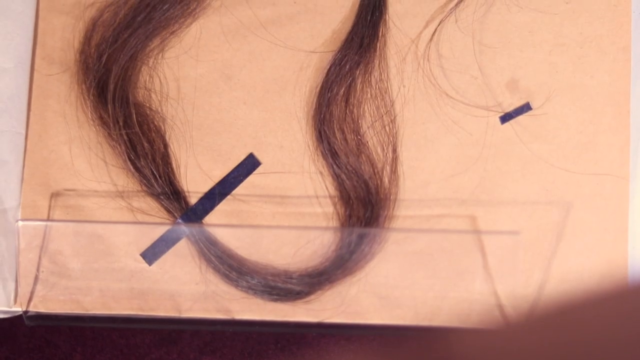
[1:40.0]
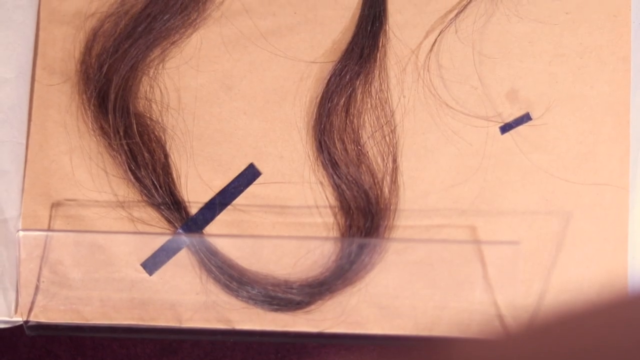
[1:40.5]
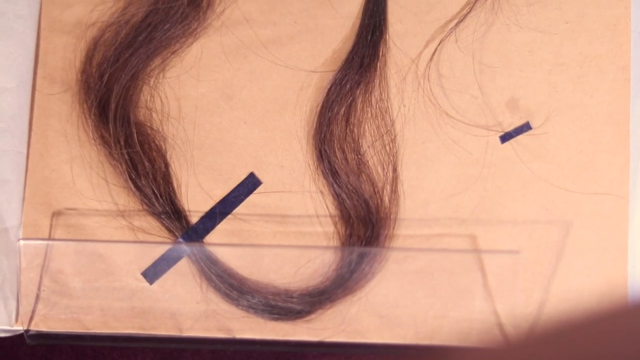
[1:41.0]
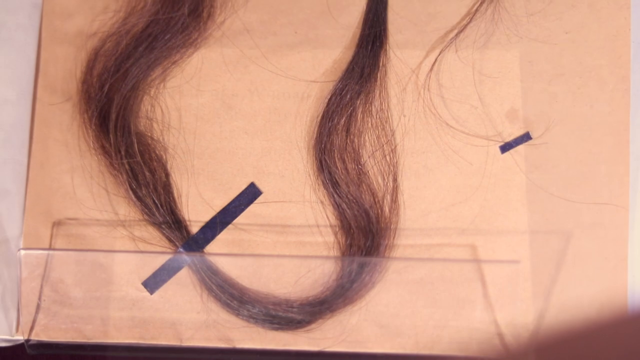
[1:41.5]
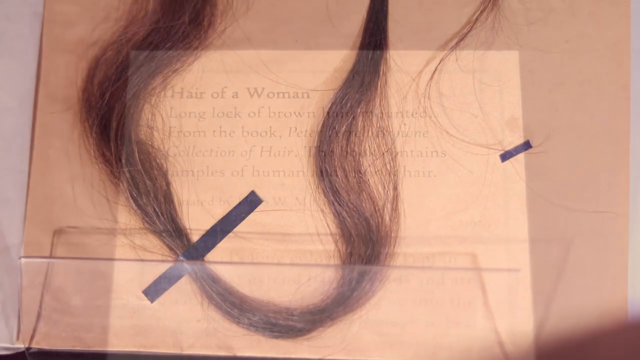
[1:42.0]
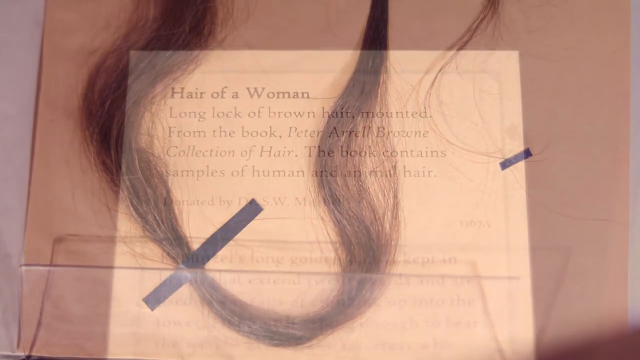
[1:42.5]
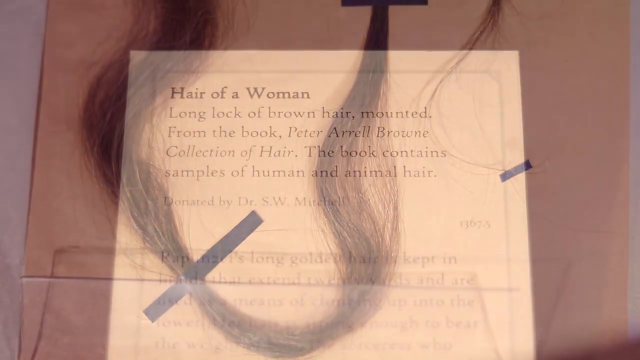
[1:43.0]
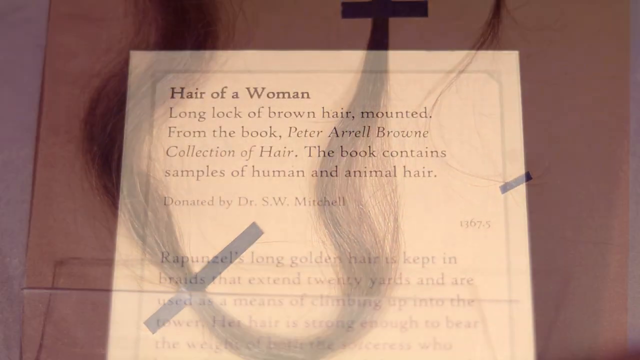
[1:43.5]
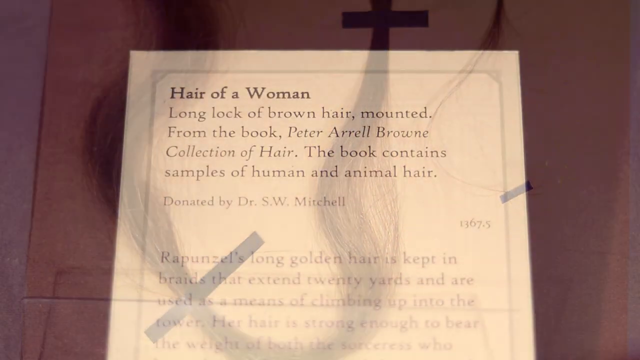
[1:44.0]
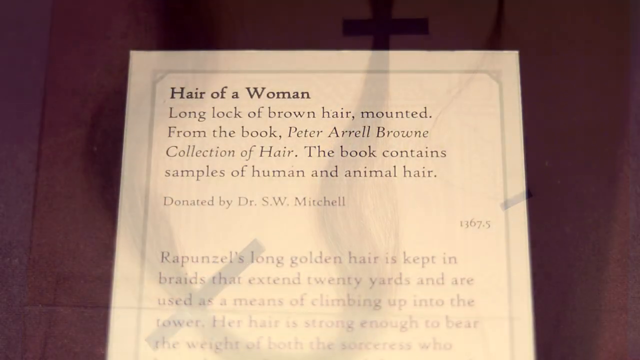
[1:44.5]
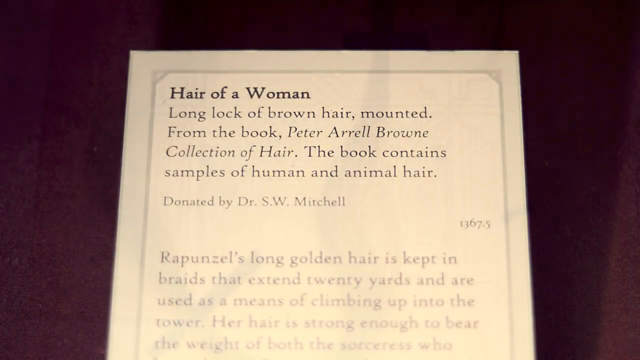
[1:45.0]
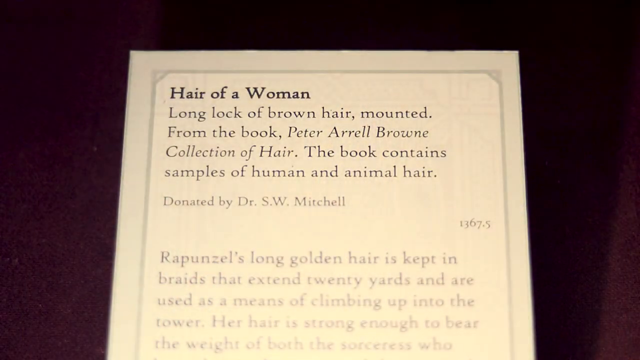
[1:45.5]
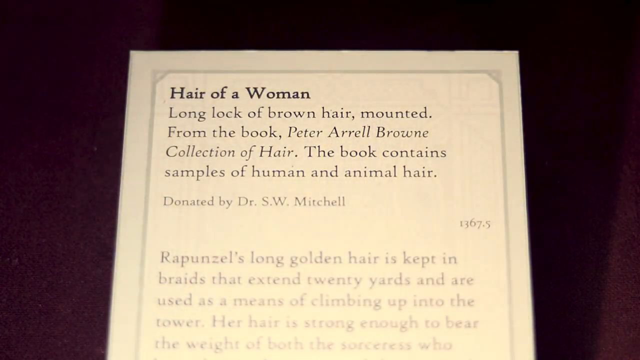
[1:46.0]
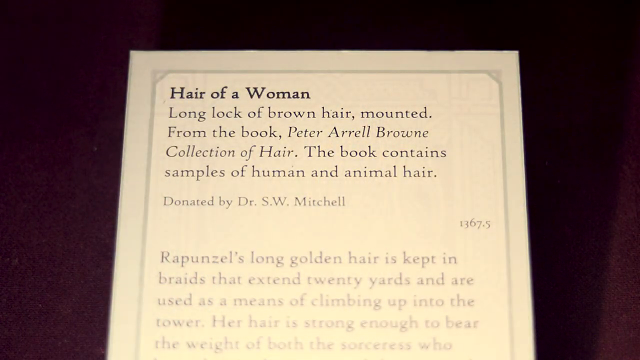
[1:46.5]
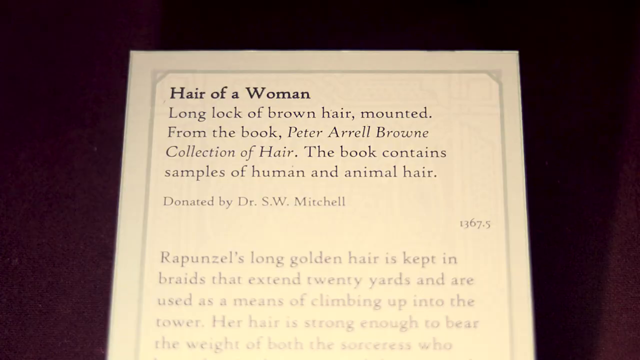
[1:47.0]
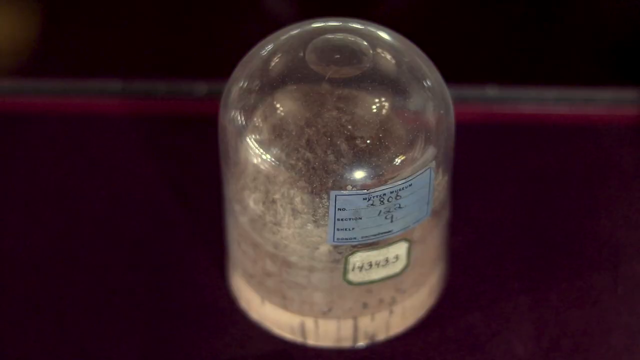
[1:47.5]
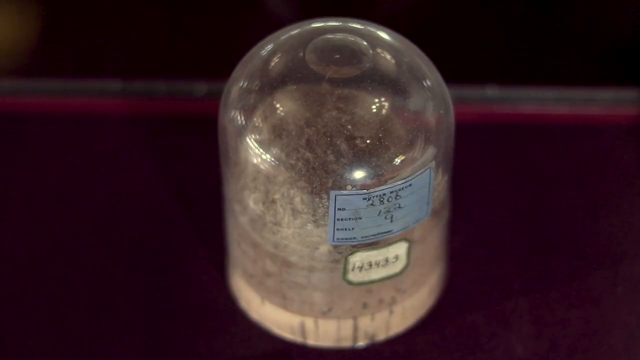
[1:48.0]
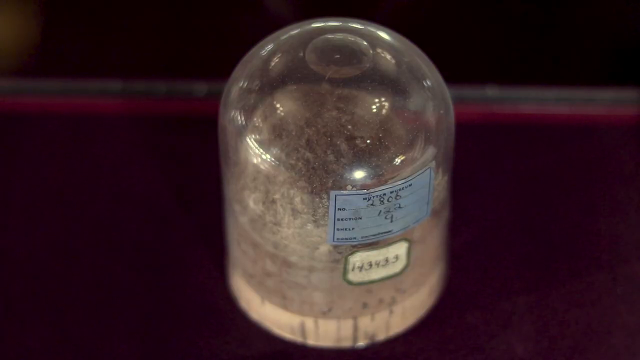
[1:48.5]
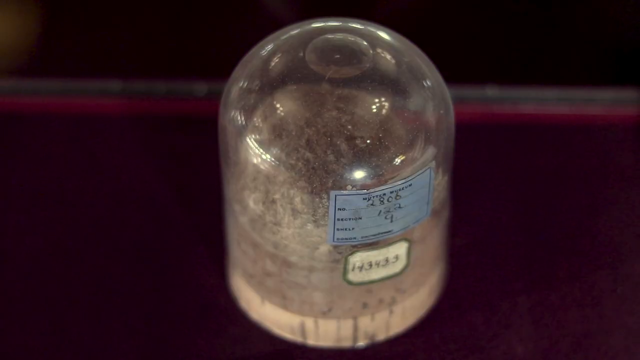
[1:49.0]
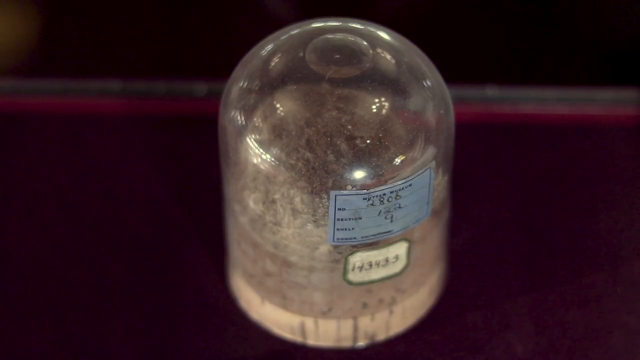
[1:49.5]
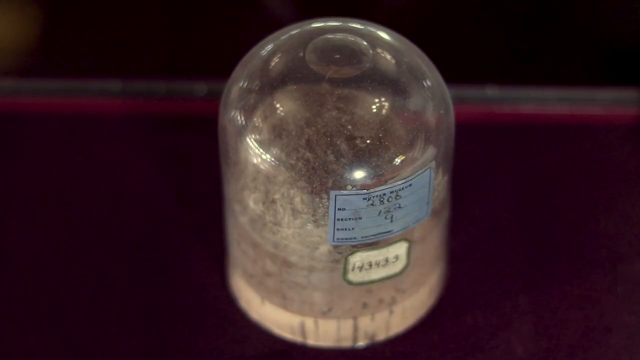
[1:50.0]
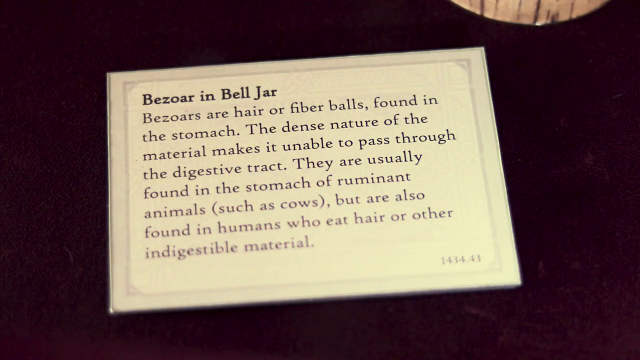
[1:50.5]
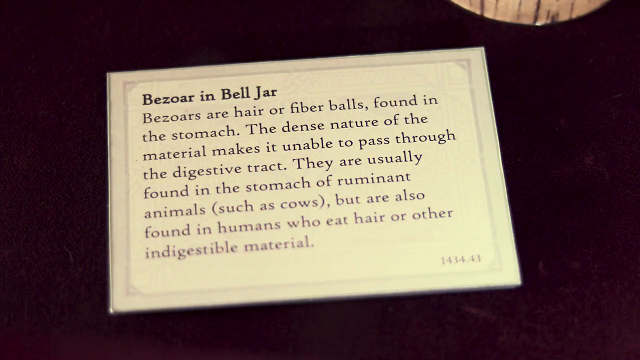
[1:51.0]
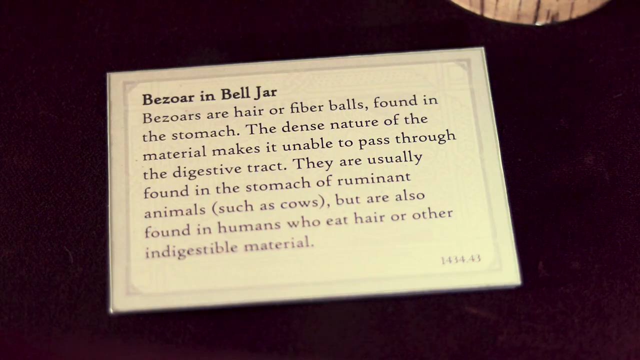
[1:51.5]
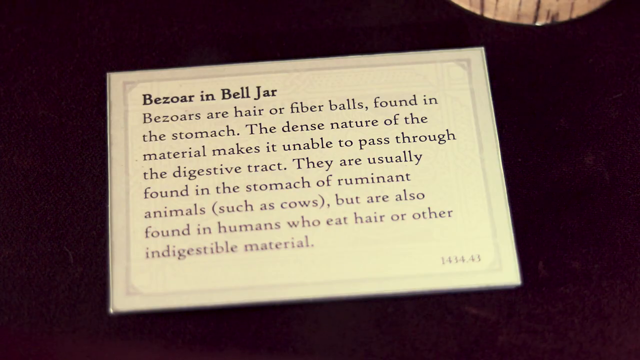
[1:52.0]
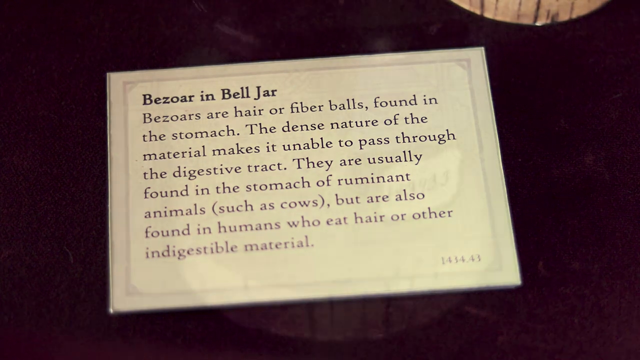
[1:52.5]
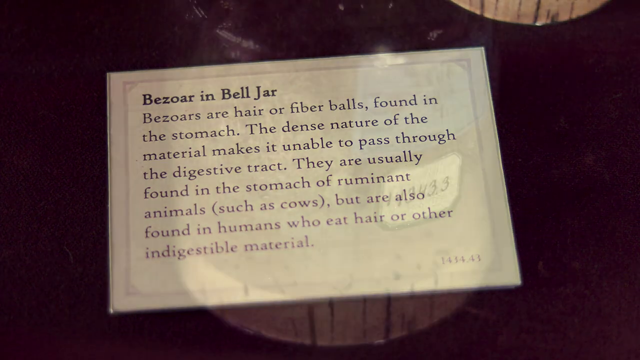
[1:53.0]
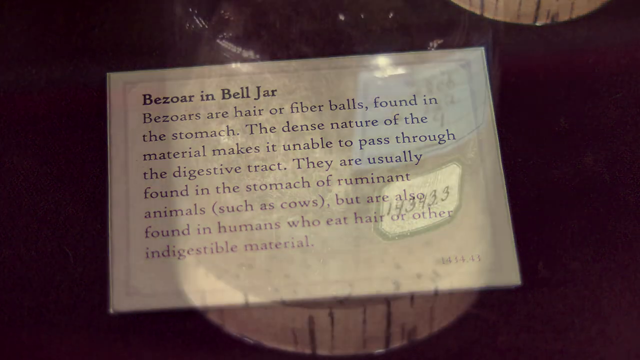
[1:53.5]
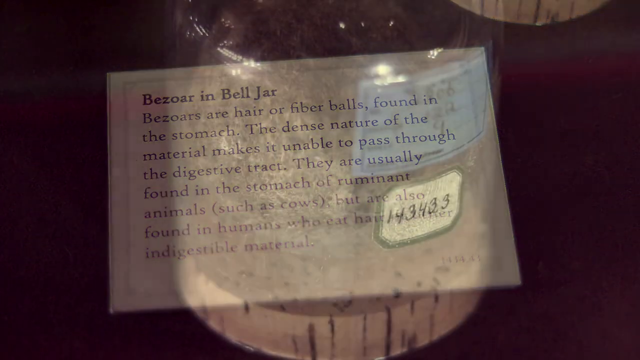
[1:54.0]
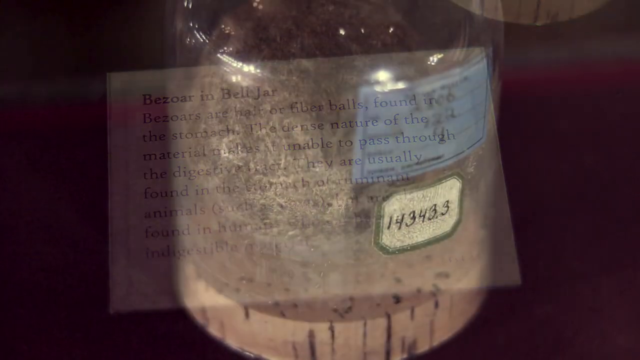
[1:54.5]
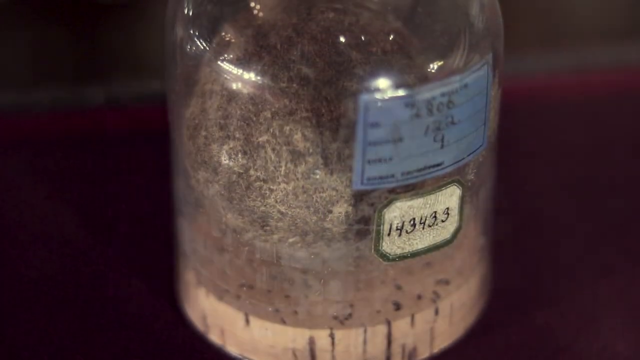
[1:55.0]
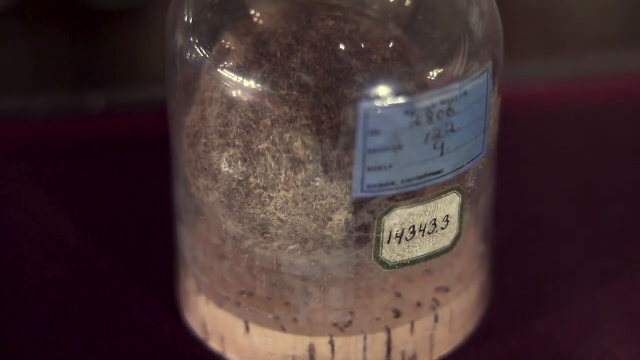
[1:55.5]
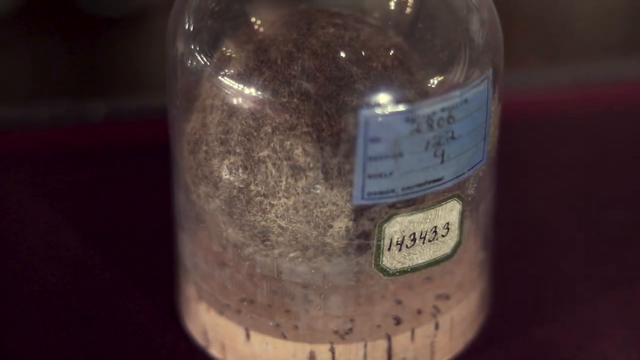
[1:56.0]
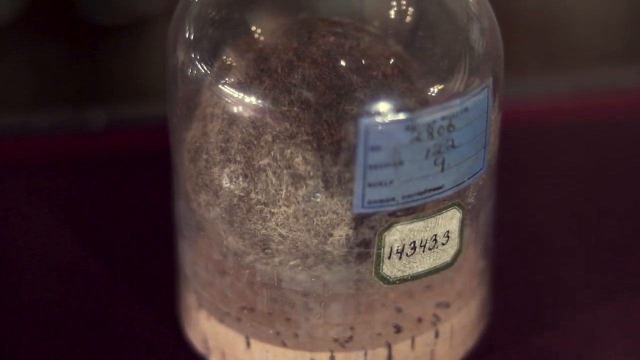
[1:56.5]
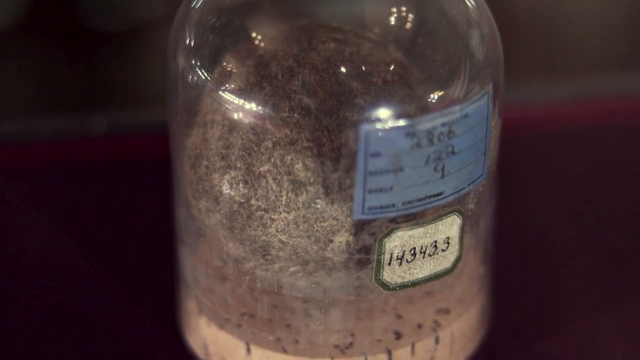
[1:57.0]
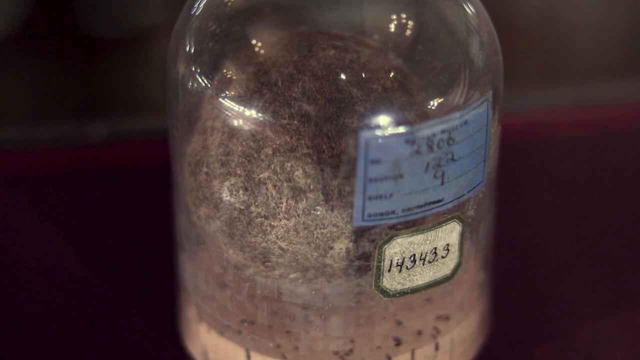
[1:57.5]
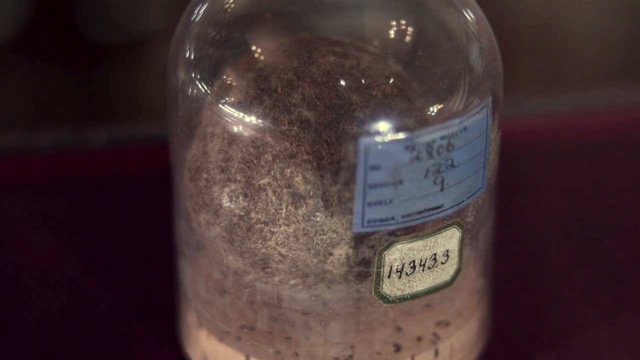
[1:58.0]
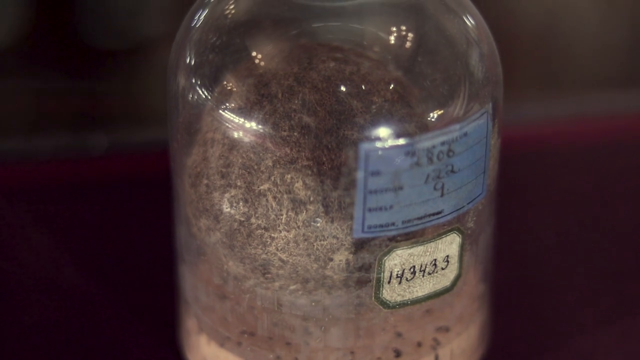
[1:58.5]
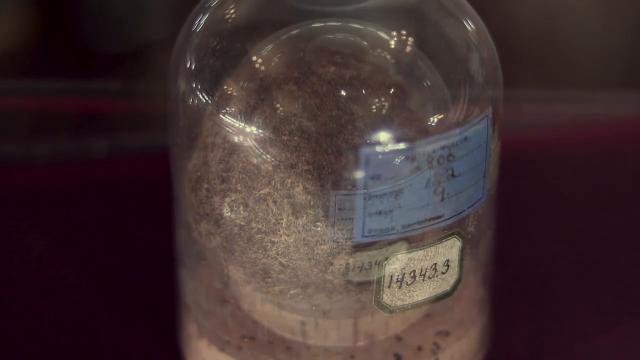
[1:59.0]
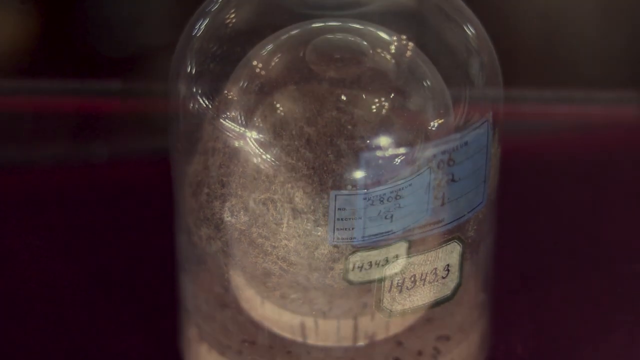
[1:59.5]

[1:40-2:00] The hair taped onto the board looks like it has been cut, with the tape fastening it down. A label identifies it as hair of a woman. The small glass cloche appears, with a blue label on it whose text describes hair or fibre balls found in the stomach: "The dense nature of the material makes it unable to pass through the digestive tract" and they are "usually found in the stomach of ruminant animals such as cows but are also found in humans who eat hair or other indigestible material." The cloche with the item inside is shown again, bearing the number "14343.3" and a blue-lined label. The first label reads "hair of a woman, a long lock of brown hair mounted from the book" and "The book contains samples of human and animal hair." It also states who donated it, with a number beneath. Further text reads "Rapunzel's long golden hair is kept in braids that extend 20 yards and are used as a means of climbing up" before fading out at the bottom of the screen so that no more can be read.